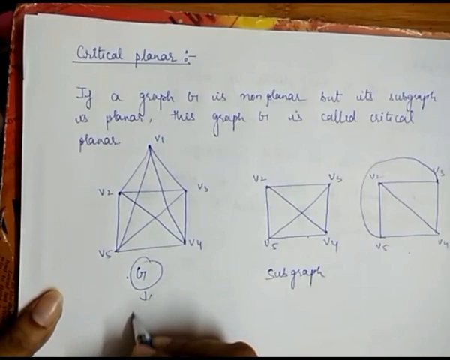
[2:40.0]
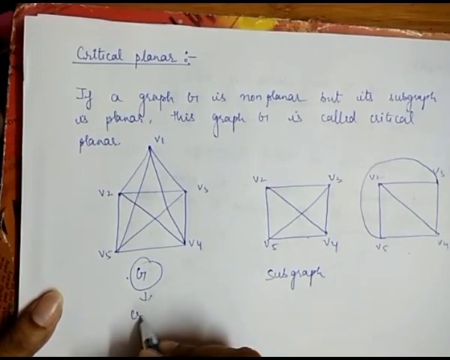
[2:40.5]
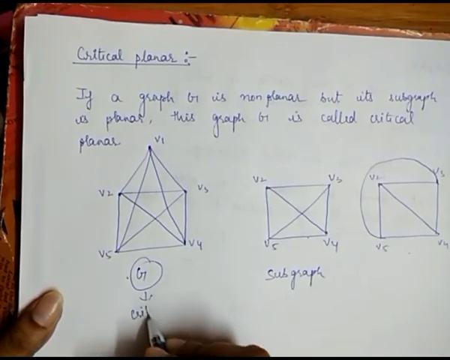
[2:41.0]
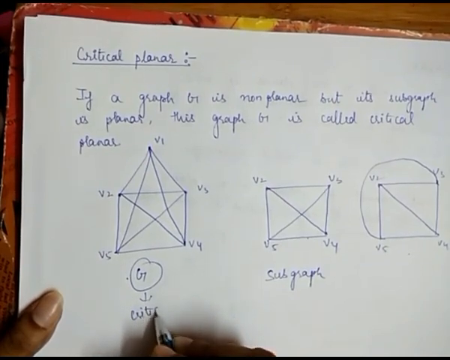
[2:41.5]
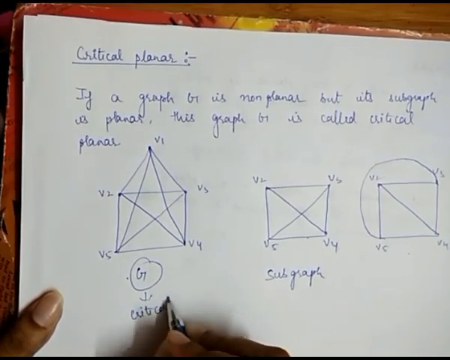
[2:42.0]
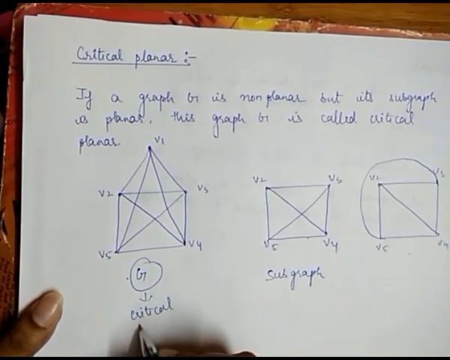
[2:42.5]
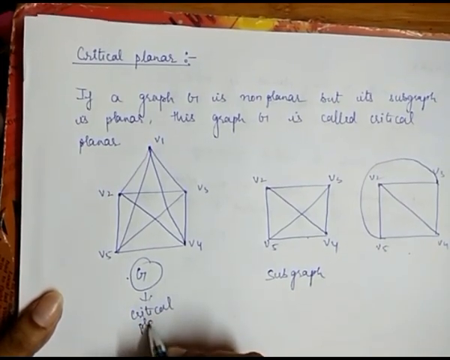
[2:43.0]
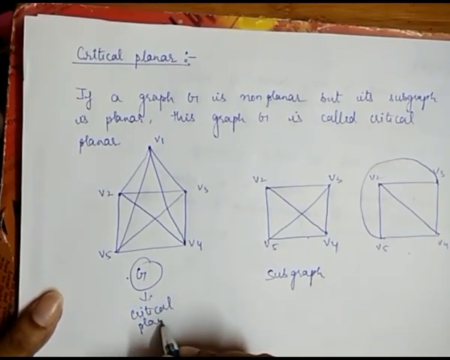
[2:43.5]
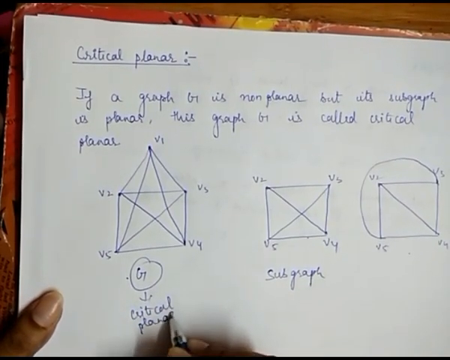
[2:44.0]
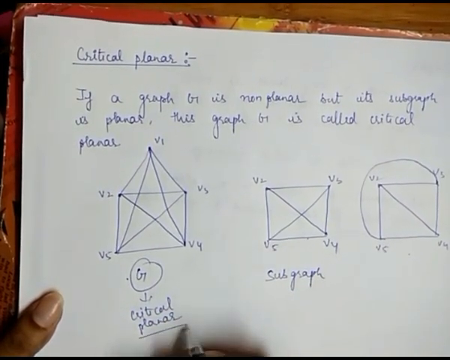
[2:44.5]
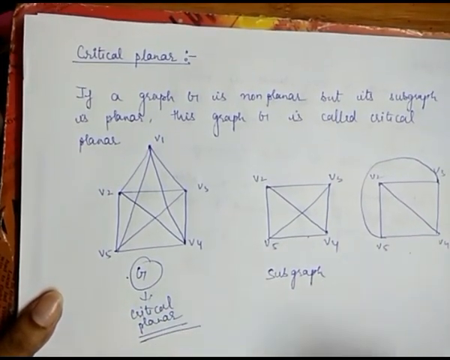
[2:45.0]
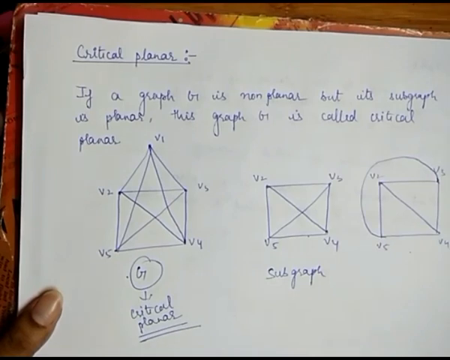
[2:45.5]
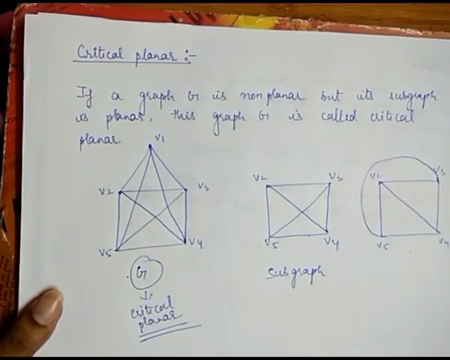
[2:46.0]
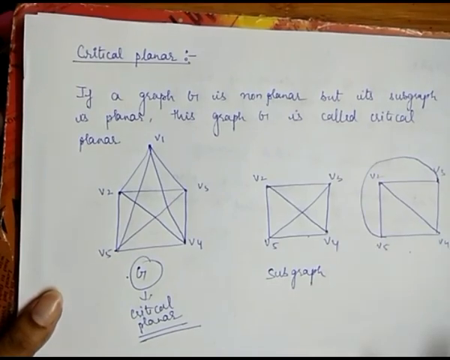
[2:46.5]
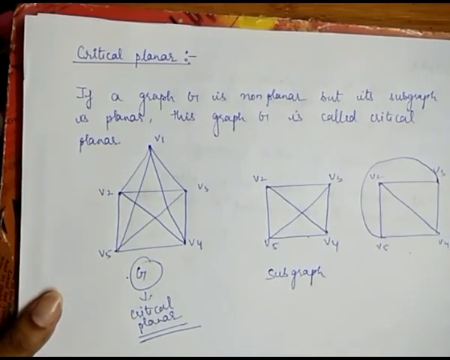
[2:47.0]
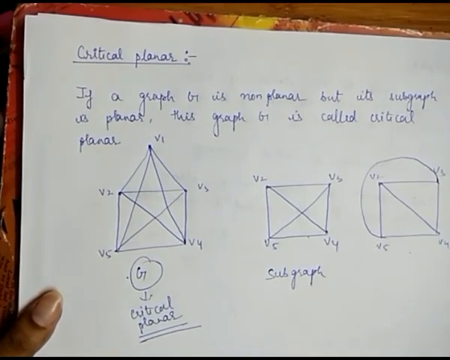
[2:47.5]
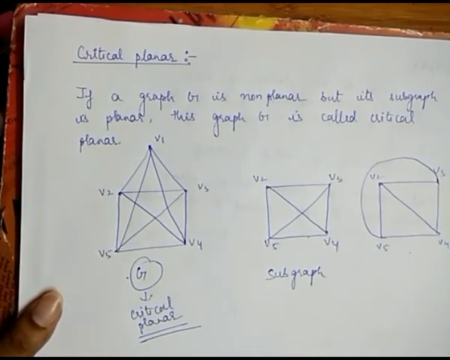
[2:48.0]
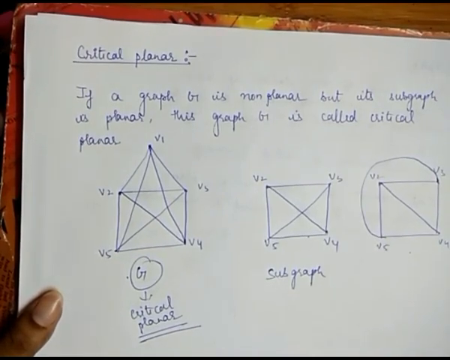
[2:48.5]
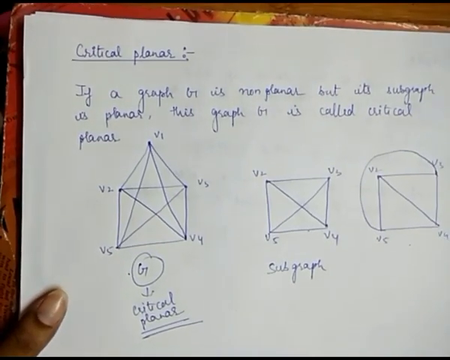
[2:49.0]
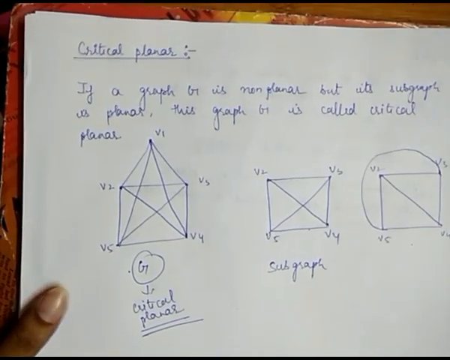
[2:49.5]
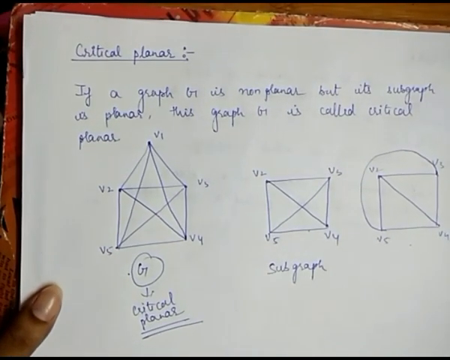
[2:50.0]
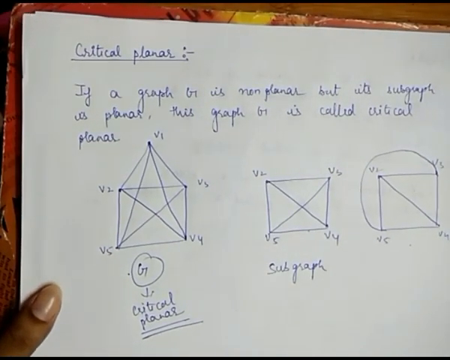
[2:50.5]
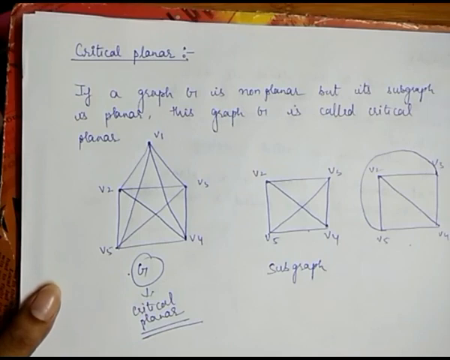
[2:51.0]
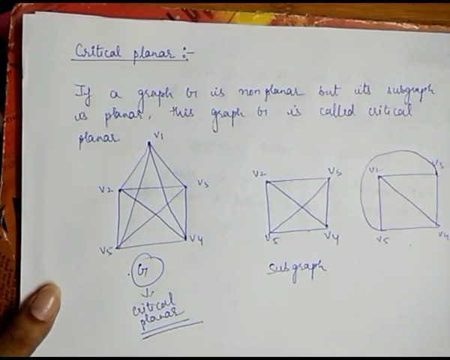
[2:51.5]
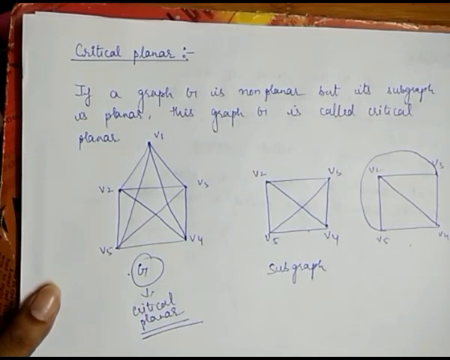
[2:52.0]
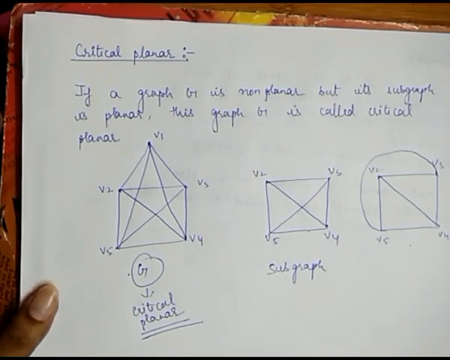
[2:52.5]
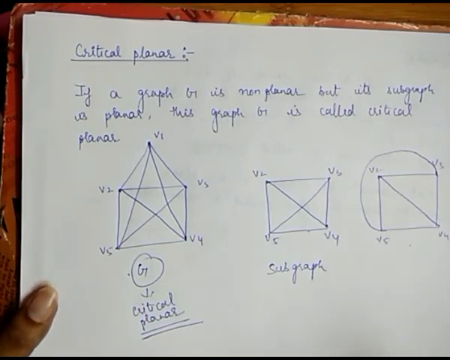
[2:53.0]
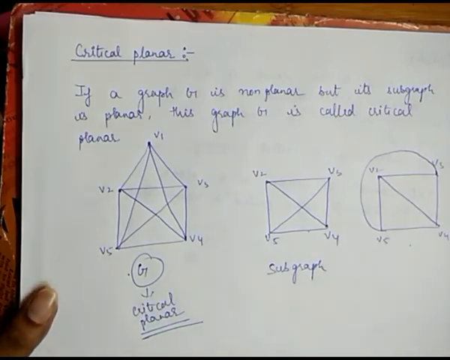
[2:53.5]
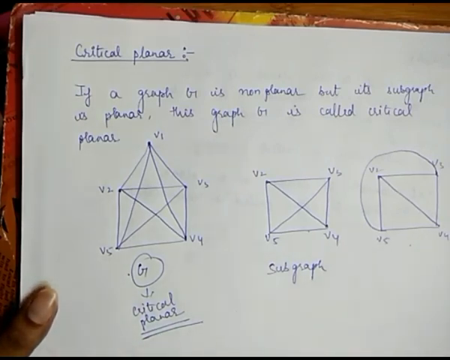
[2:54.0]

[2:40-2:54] Having just drawn the arrow under the circled G, the woman points her pen at the paper below the arrow. She writes "critical" under the arrow and then the word "planner", and underlines it twice. She moves her hand with the pen off the right side of the paper. Her left thumb in the lower corner adjusts and stabilizes the paper, which moves slightly up and down. The shadow of her right hand moves across the paper, as if something may be being explained.